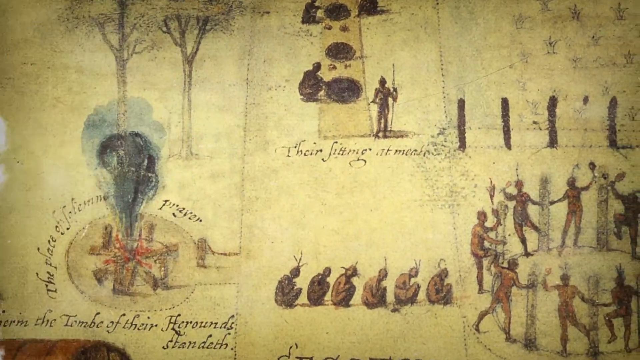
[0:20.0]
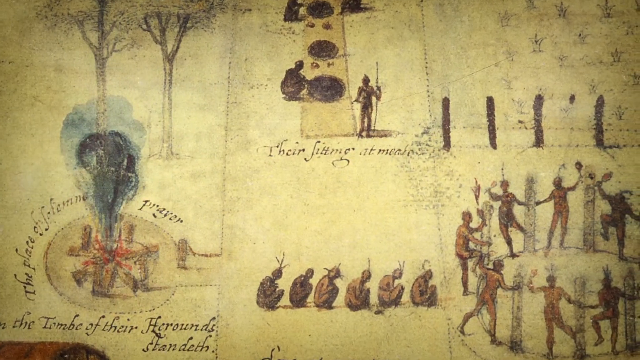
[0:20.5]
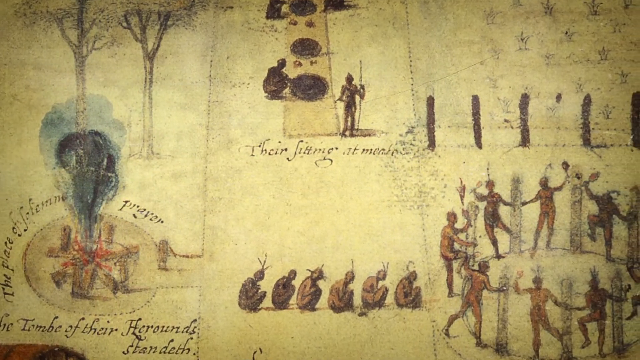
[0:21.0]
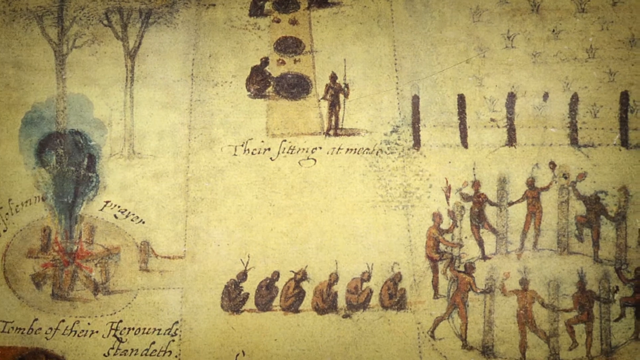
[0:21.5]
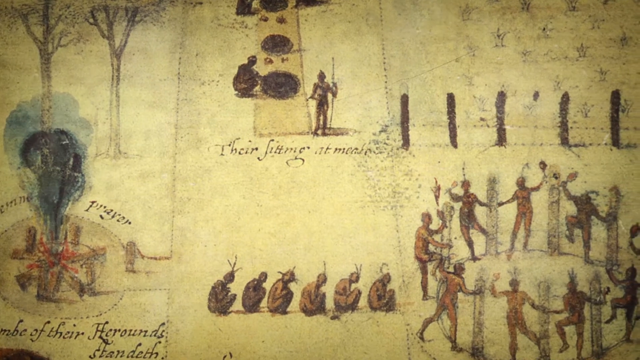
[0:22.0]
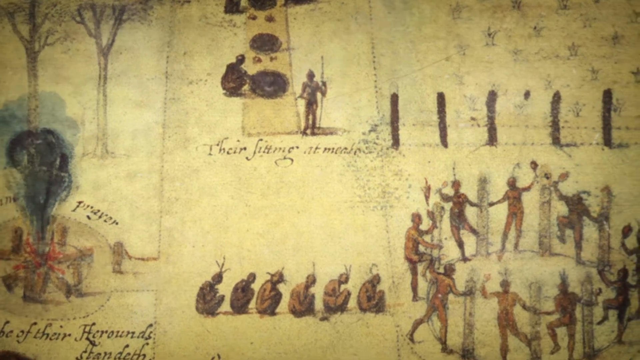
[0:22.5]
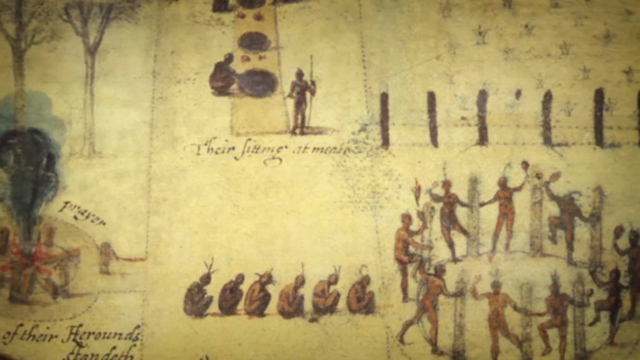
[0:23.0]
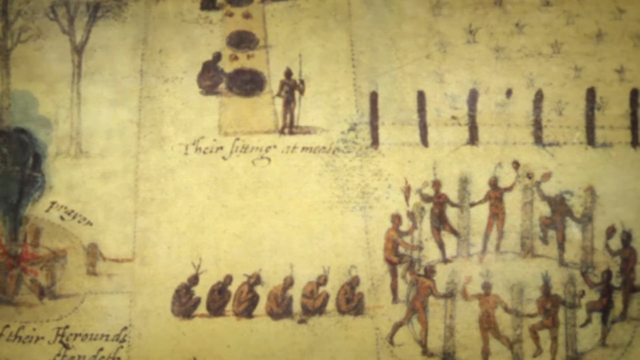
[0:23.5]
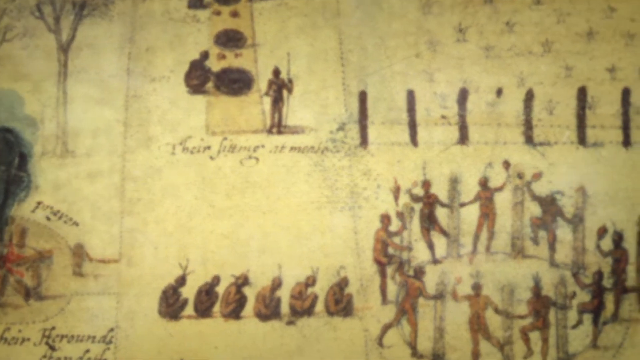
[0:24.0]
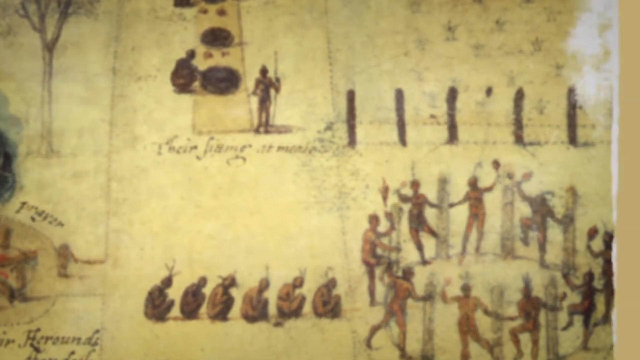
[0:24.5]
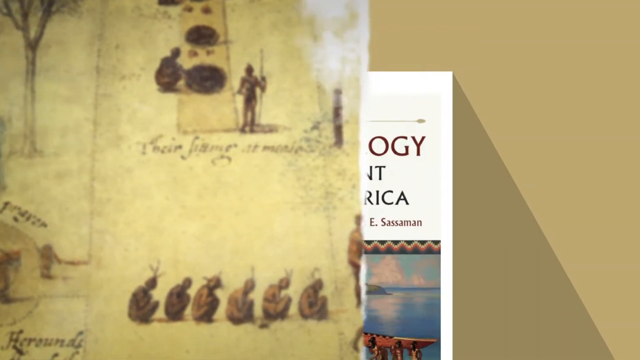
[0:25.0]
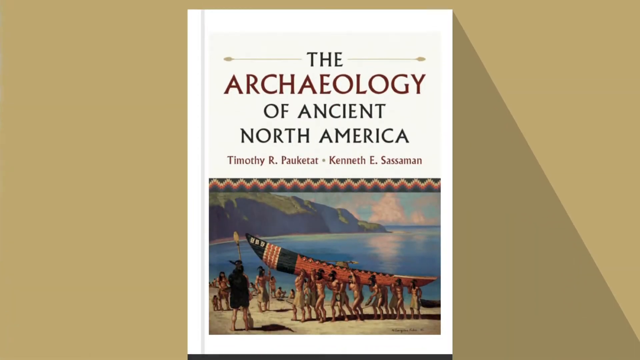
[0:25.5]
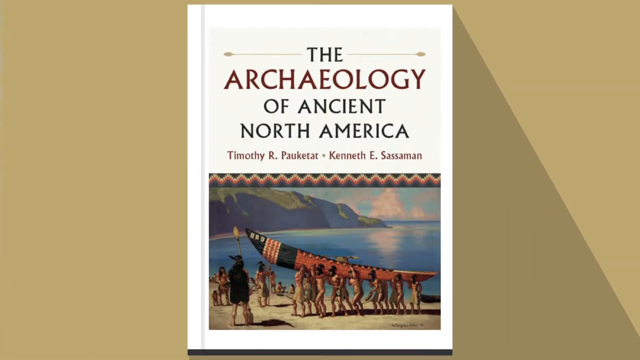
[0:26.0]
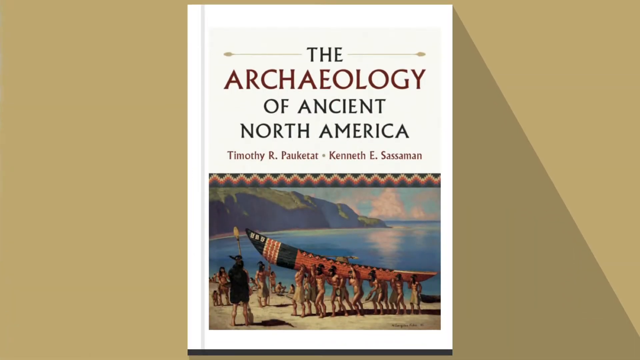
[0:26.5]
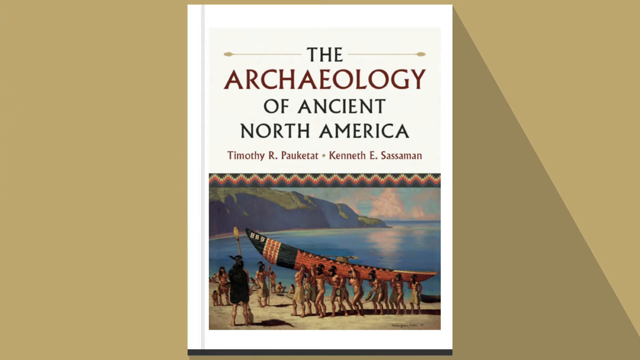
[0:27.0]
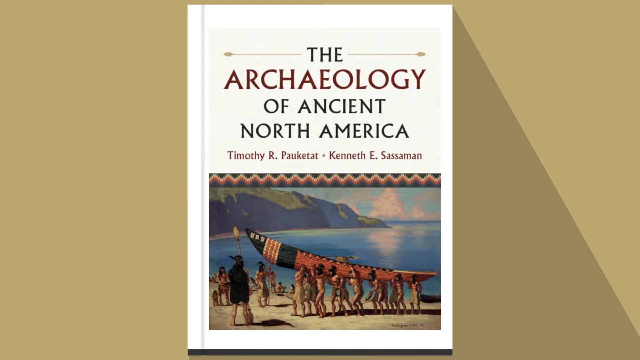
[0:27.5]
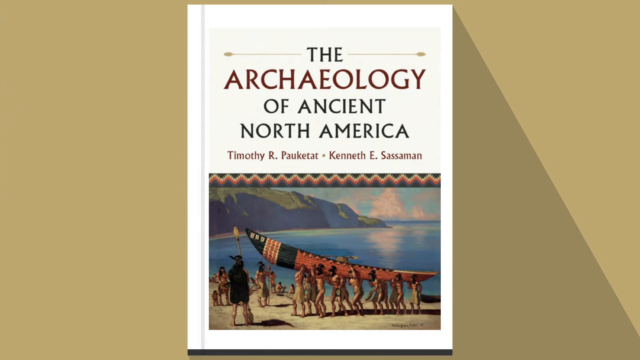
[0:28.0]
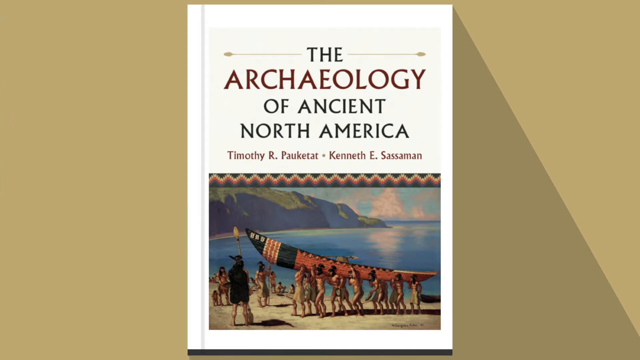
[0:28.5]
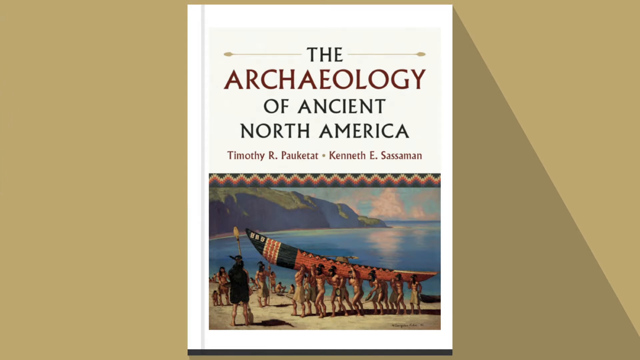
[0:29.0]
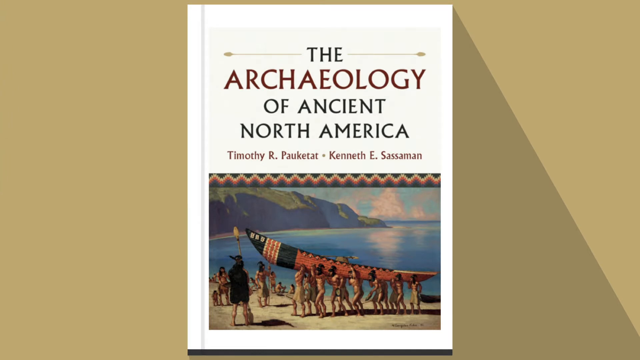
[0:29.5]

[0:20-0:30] The camera pans over an ancient document that appears to be written on some sort of hide. It contains images of hunters: at the bottom, six hunters crouch on the ground facing right, seemingly wearing some sort of headdress with horns. The left third of the document shows a burning fire at the bottom with stylized smoke rising from it, and the word "prayer" can be read on the right. Two trees, as they would look in winter, then appear at the top left. The top portion shows people sitting at mealtimes, with a blanket or piece of hide laid on the ground and copious amounts of food heaped on it.